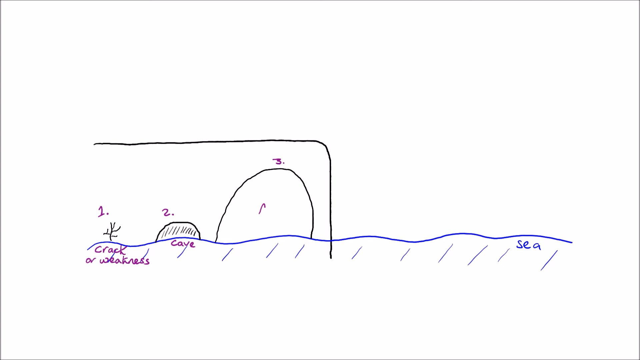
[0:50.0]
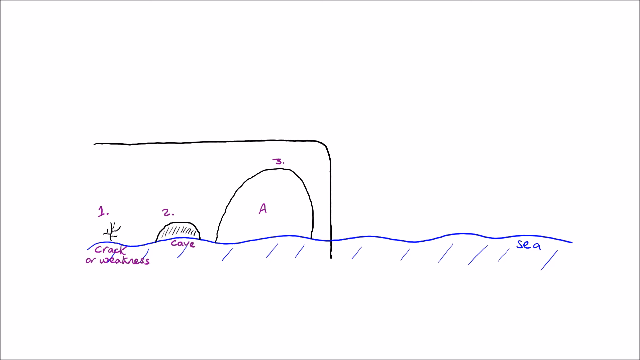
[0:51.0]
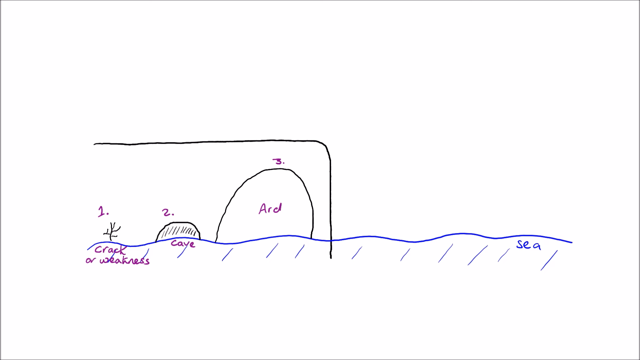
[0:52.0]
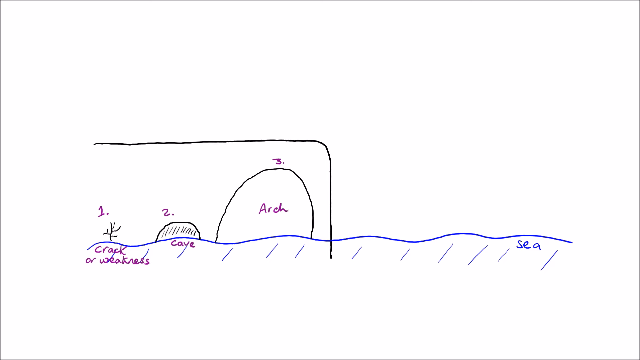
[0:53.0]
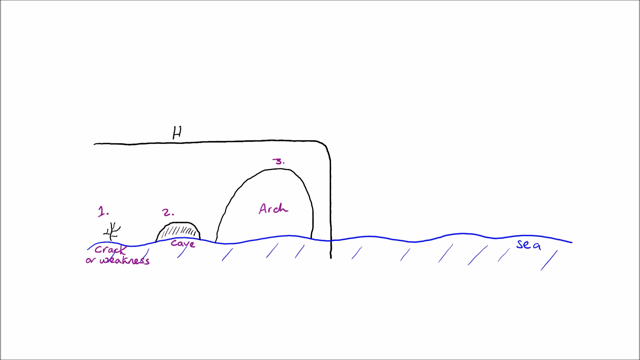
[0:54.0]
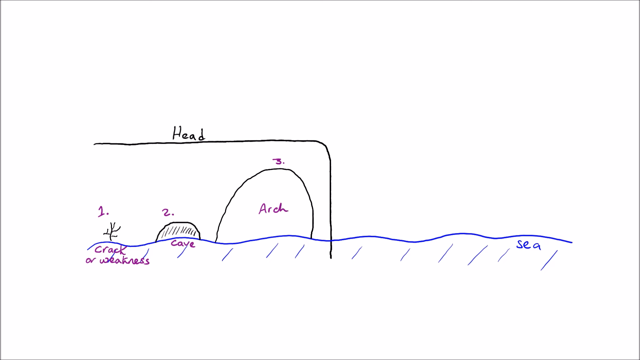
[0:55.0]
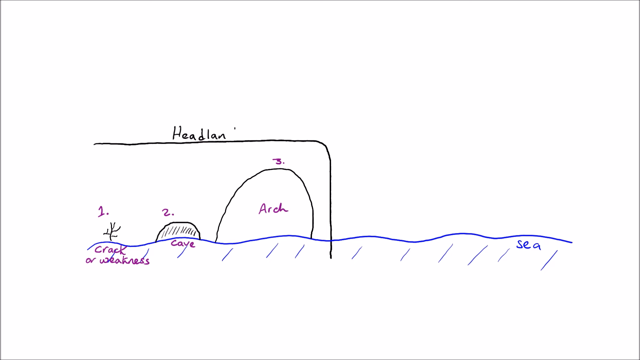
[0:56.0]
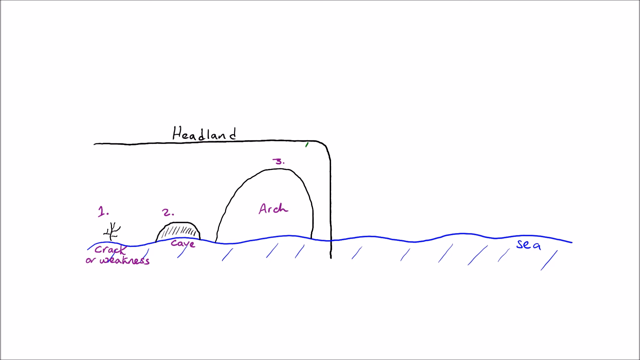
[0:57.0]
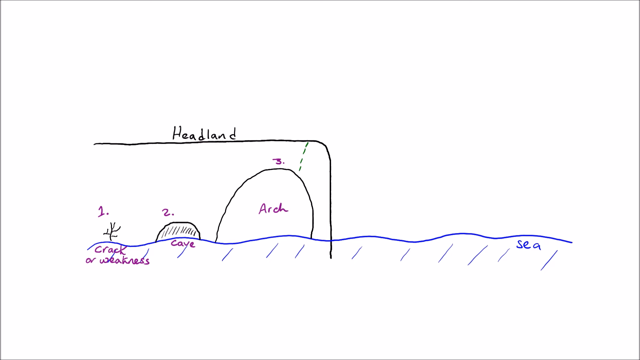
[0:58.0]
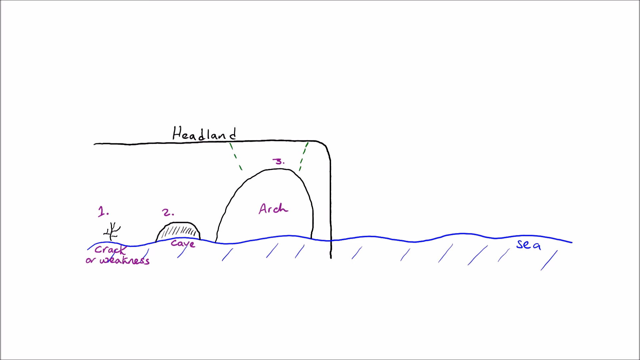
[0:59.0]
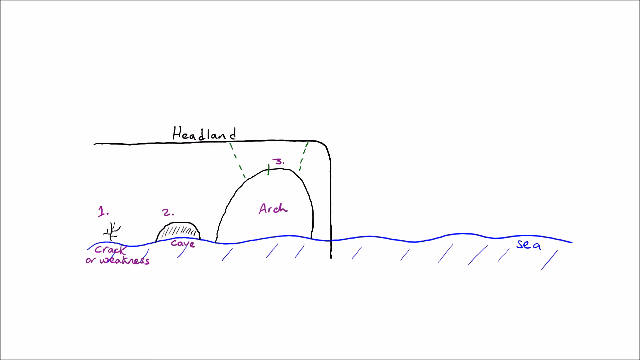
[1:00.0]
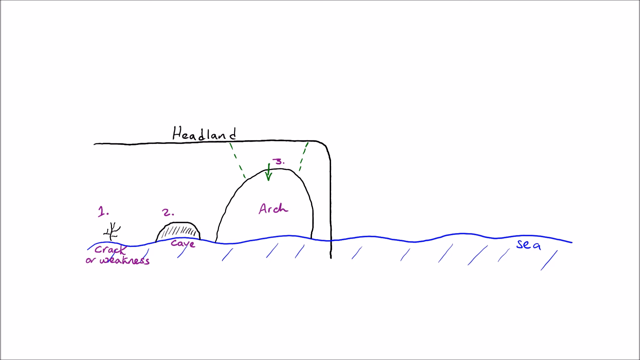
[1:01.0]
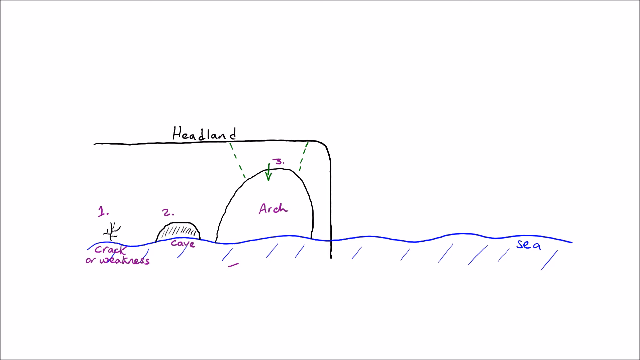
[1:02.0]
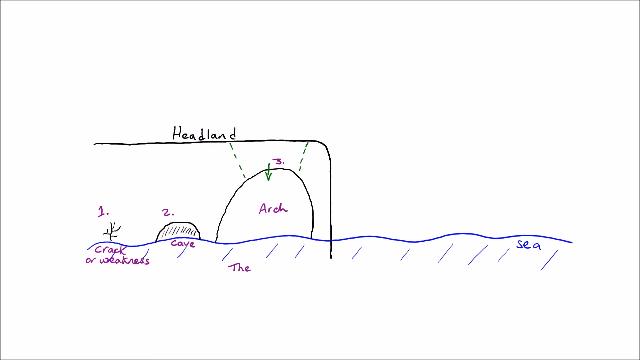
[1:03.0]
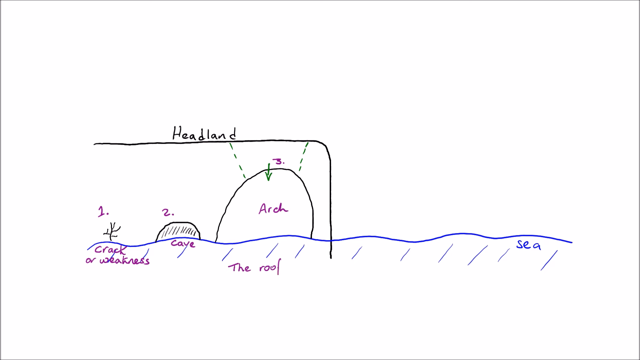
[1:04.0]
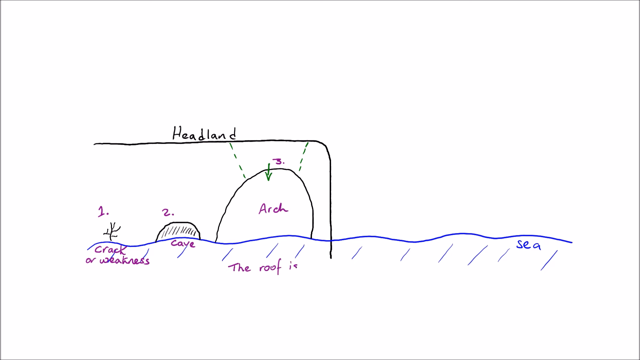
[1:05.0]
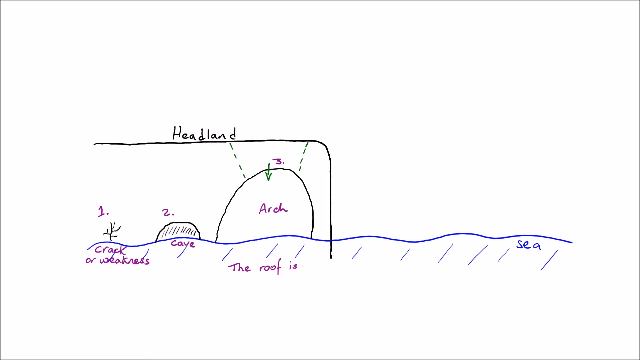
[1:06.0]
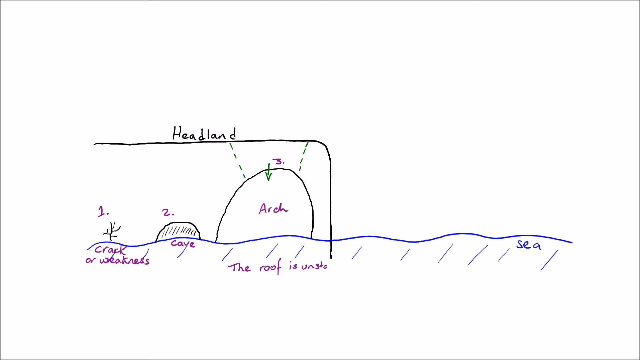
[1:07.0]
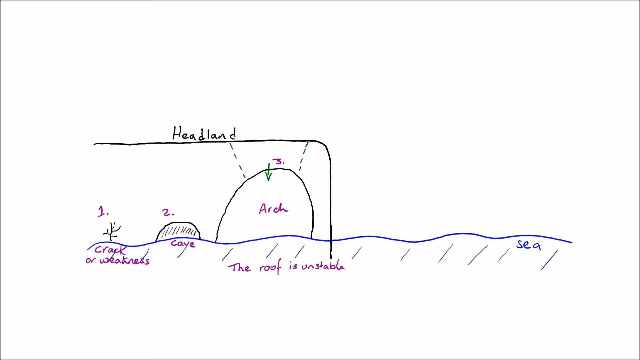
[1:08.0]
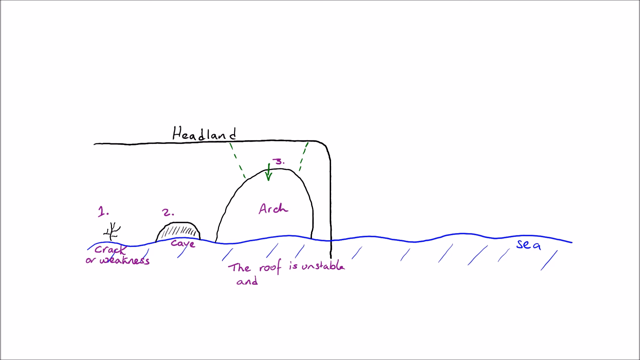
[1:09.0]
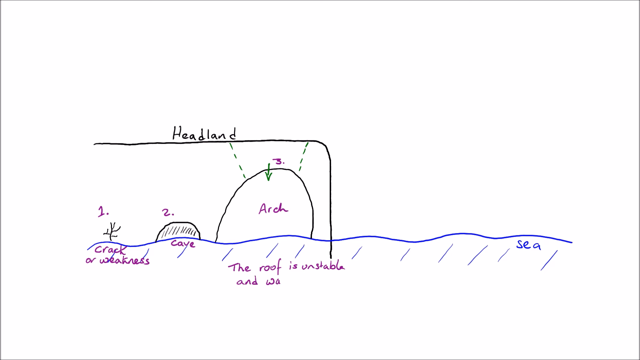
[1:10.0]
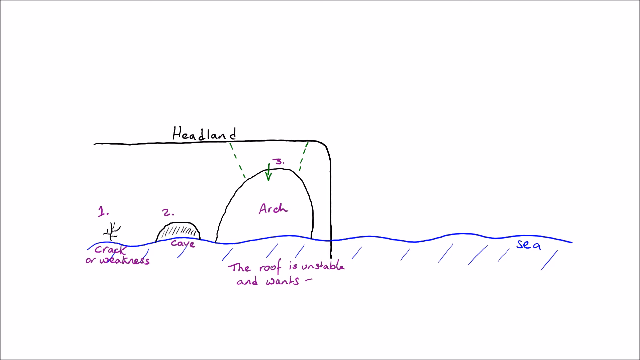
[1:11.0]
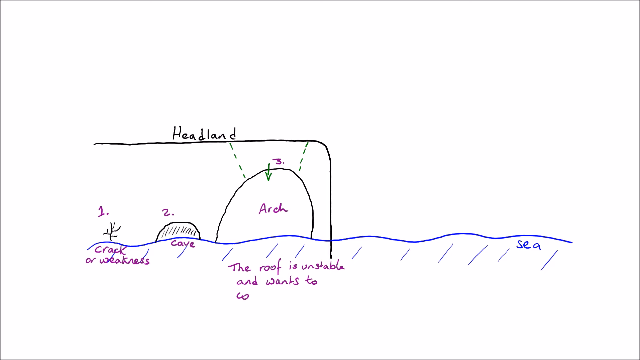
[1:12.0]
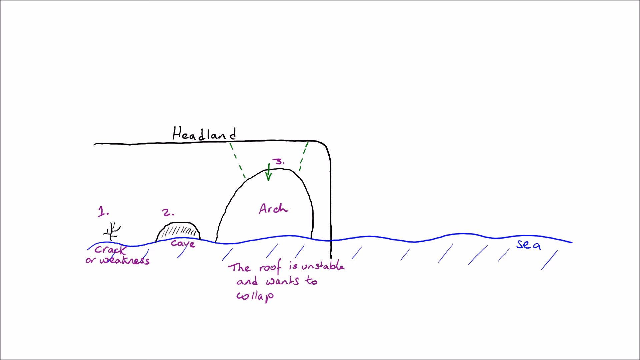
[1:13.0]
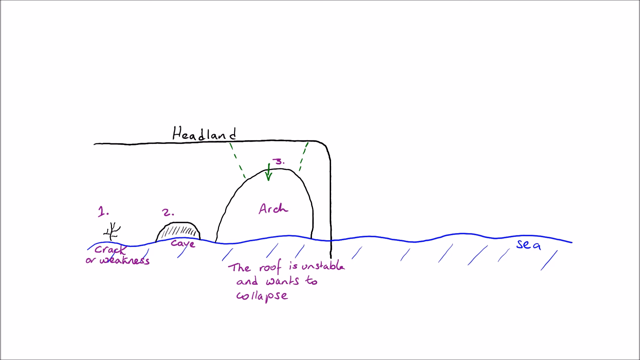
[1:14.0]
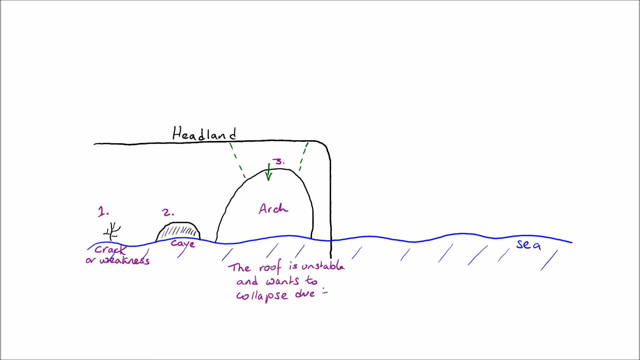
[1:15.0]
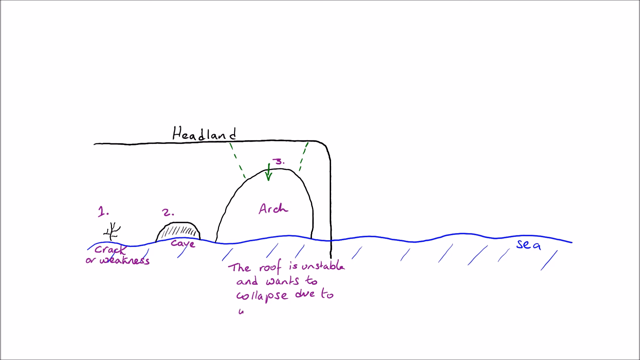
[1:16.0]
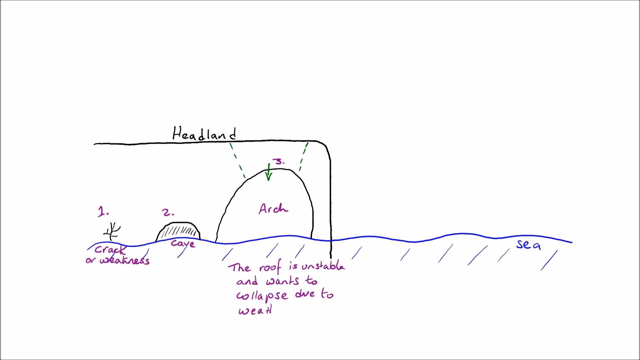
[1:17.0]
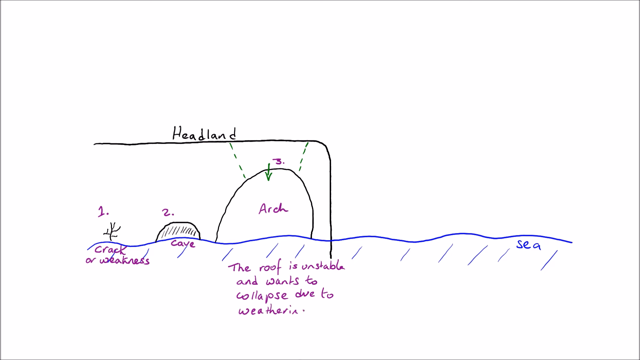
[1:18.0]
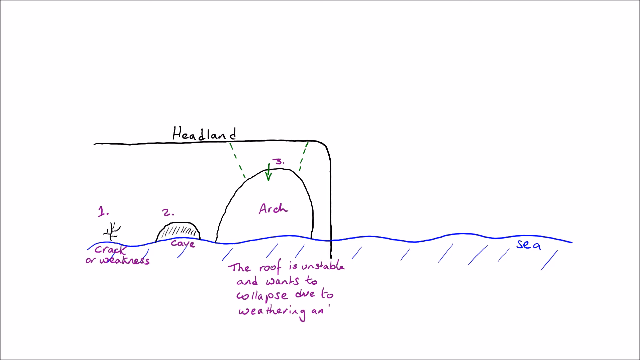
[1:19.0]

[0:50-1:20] Arrows point at the arc, number three, the largest feature cut into the headland of the mountain-like structure, at its edge. Text beside it says the roof is unstable and wants to collapse.